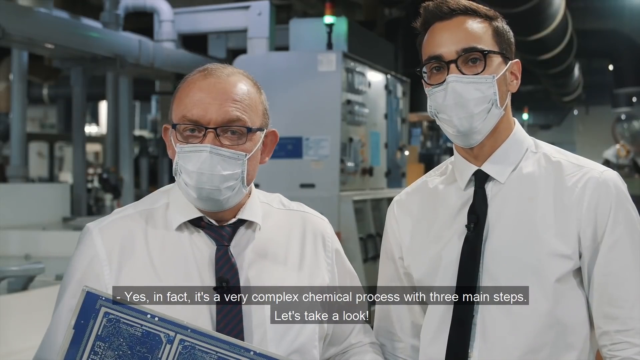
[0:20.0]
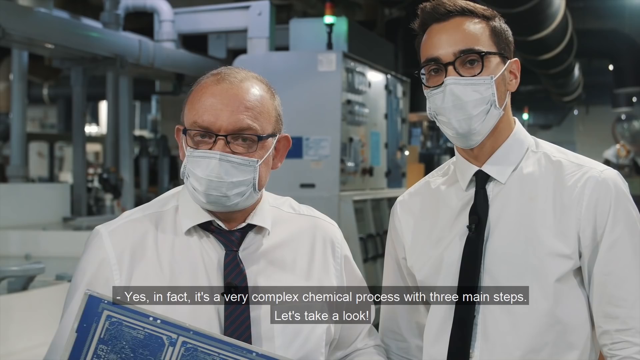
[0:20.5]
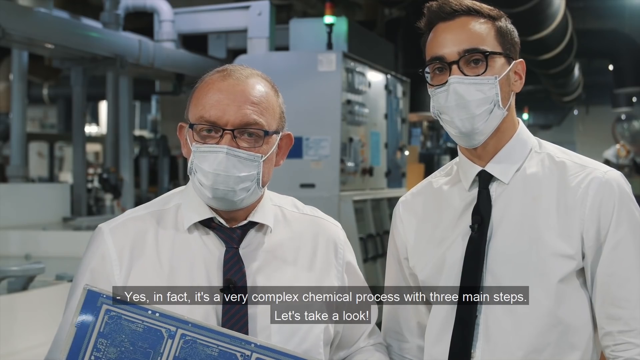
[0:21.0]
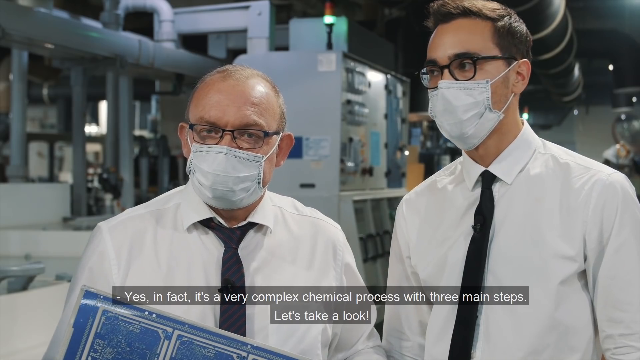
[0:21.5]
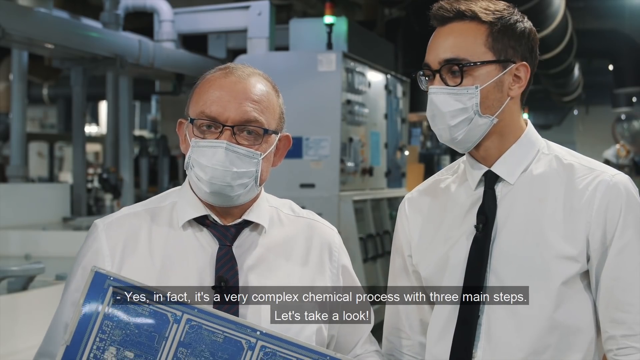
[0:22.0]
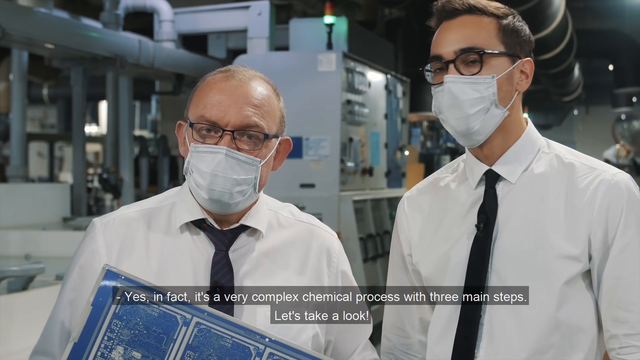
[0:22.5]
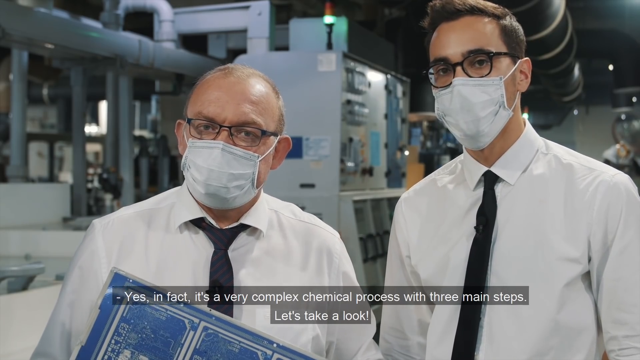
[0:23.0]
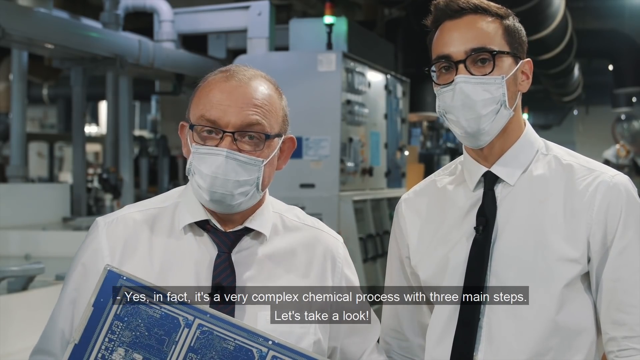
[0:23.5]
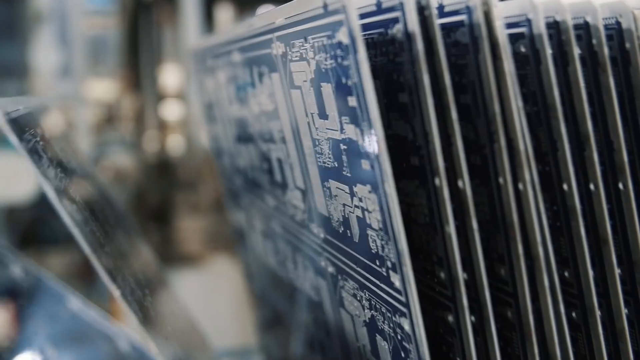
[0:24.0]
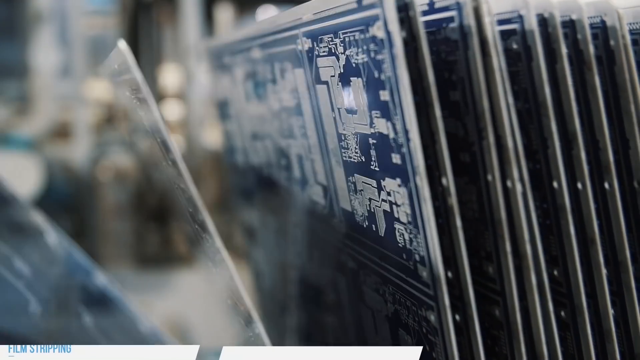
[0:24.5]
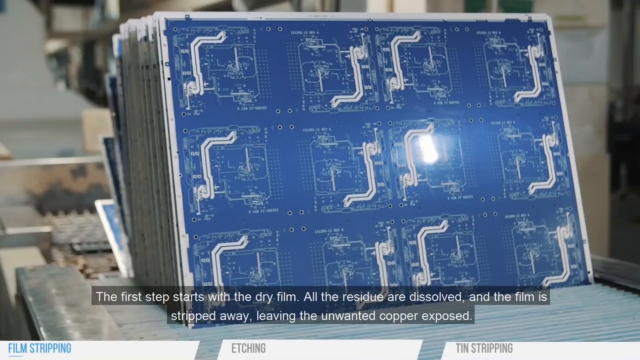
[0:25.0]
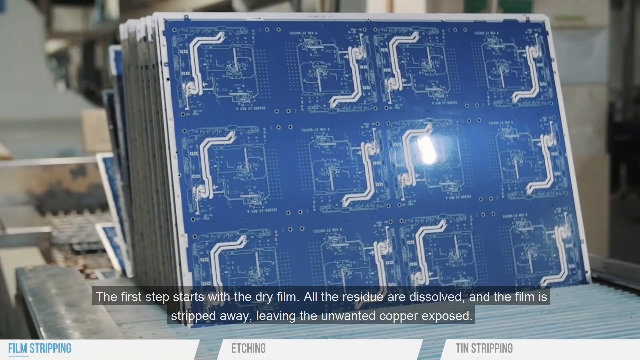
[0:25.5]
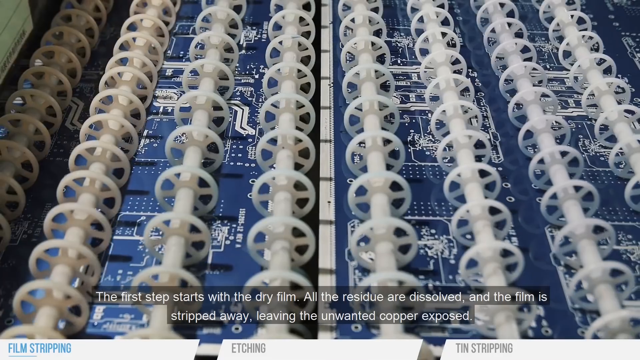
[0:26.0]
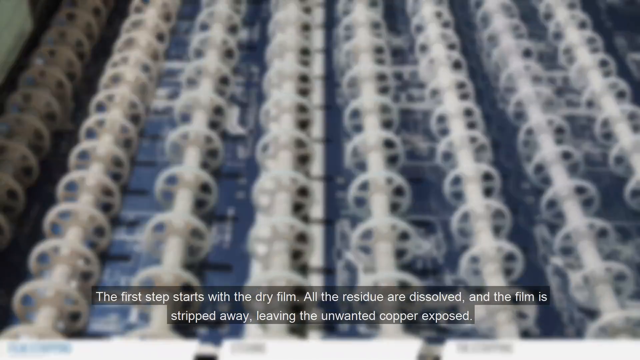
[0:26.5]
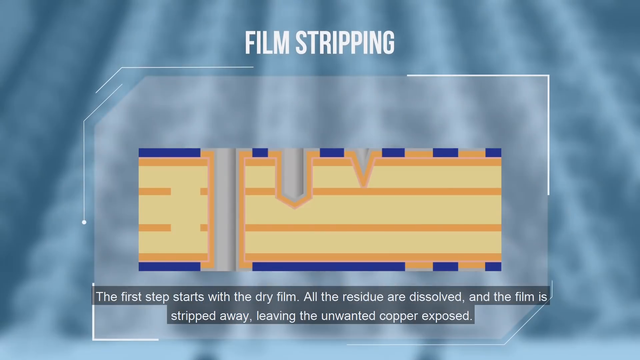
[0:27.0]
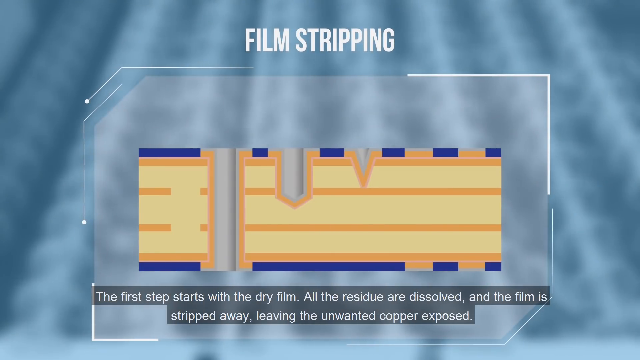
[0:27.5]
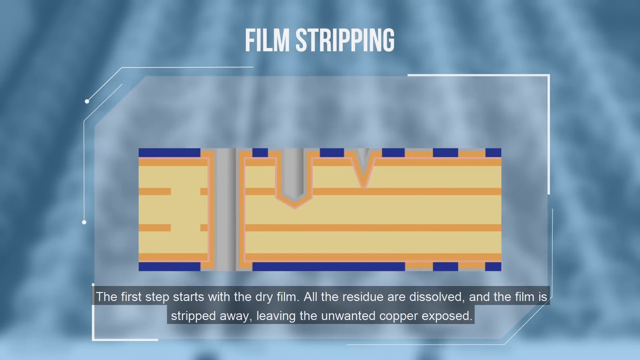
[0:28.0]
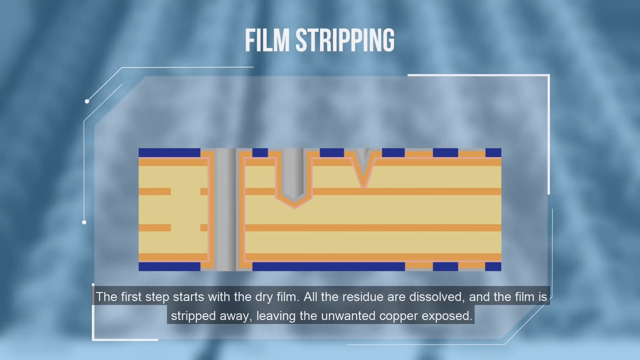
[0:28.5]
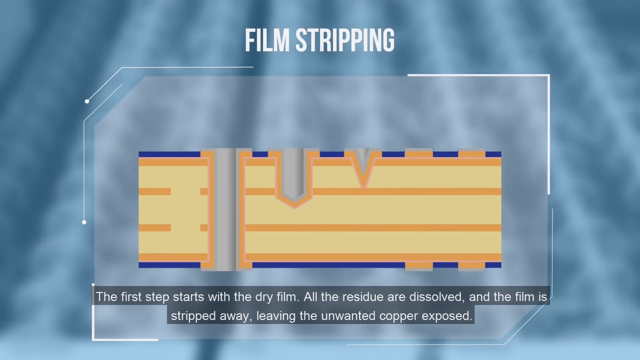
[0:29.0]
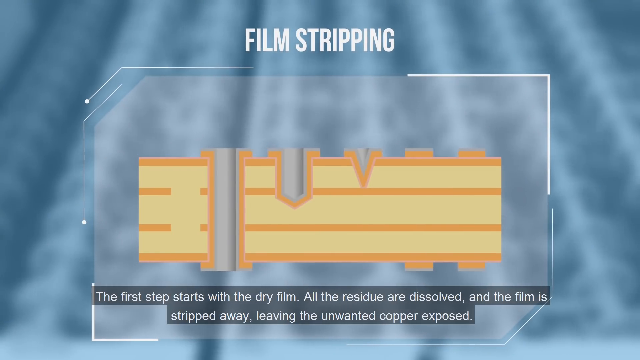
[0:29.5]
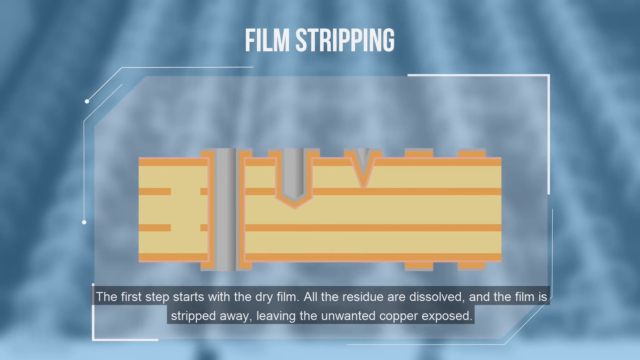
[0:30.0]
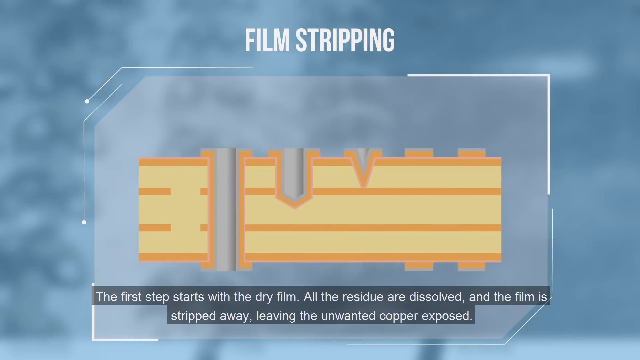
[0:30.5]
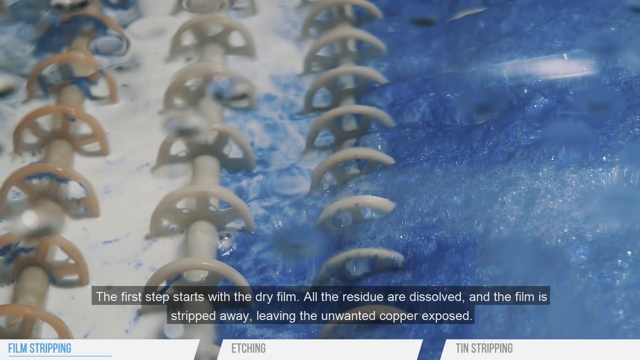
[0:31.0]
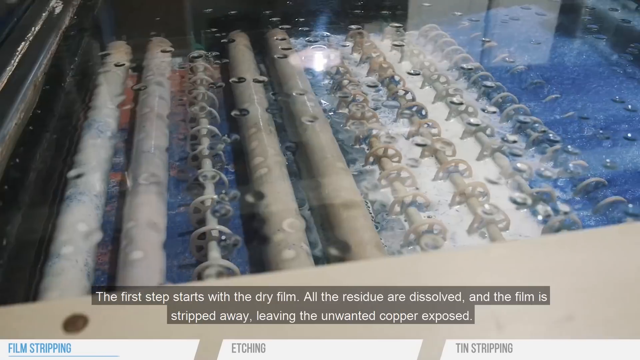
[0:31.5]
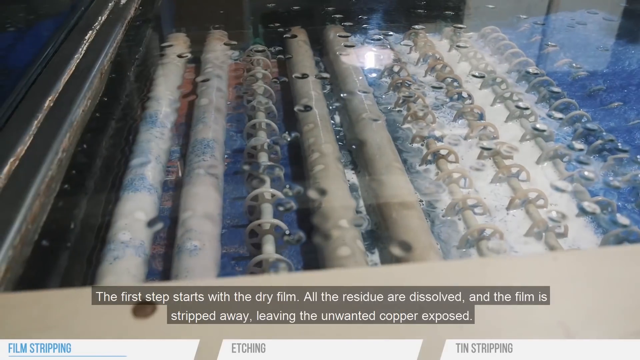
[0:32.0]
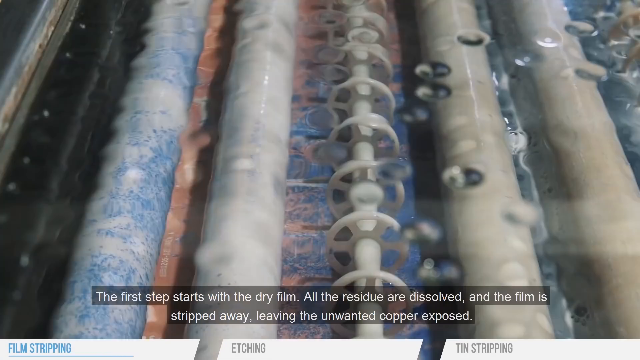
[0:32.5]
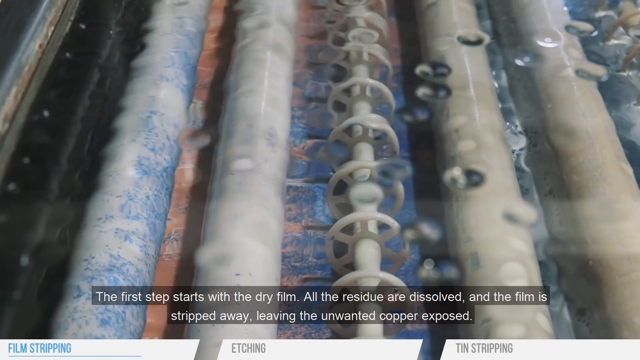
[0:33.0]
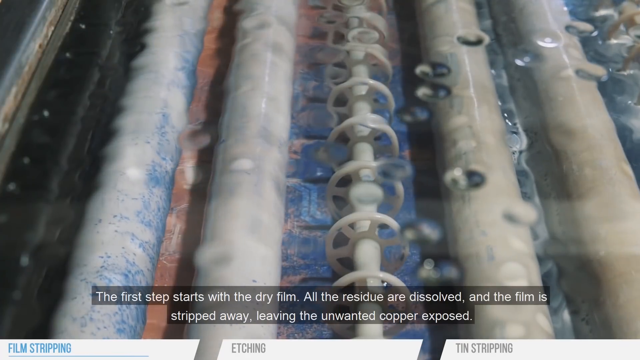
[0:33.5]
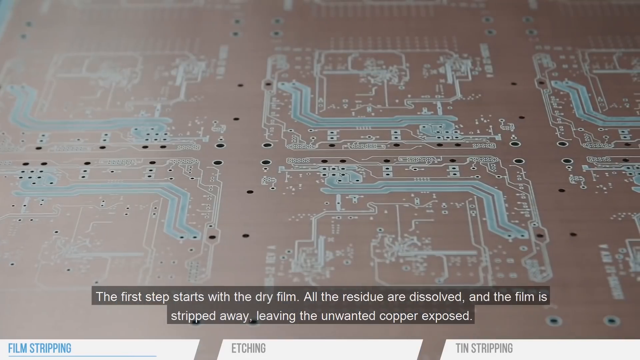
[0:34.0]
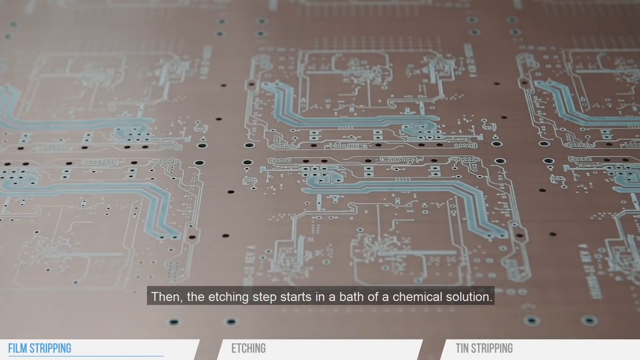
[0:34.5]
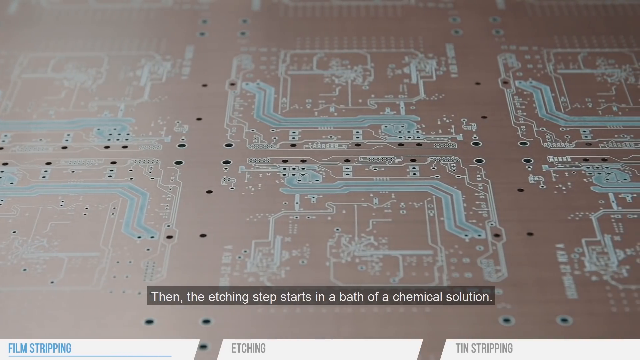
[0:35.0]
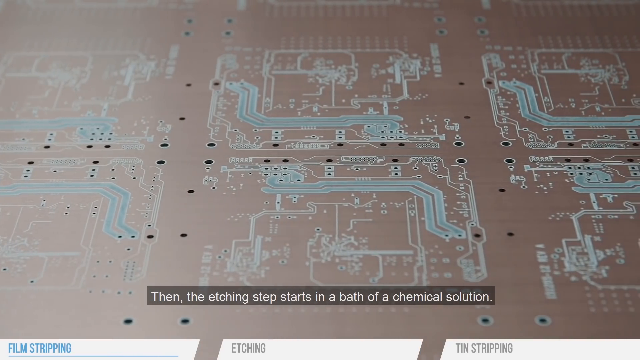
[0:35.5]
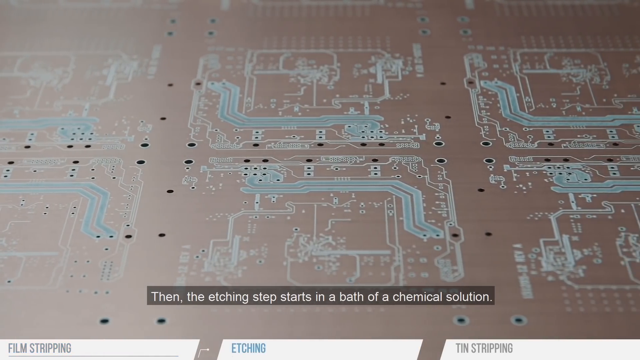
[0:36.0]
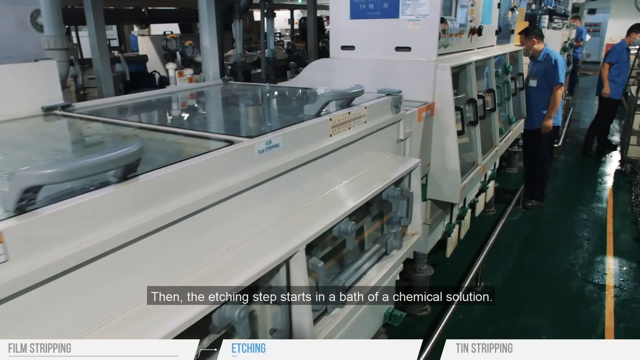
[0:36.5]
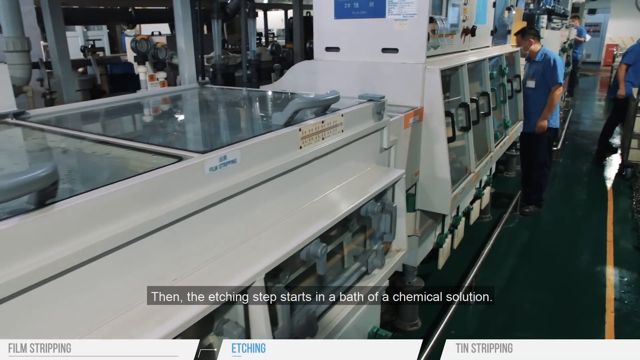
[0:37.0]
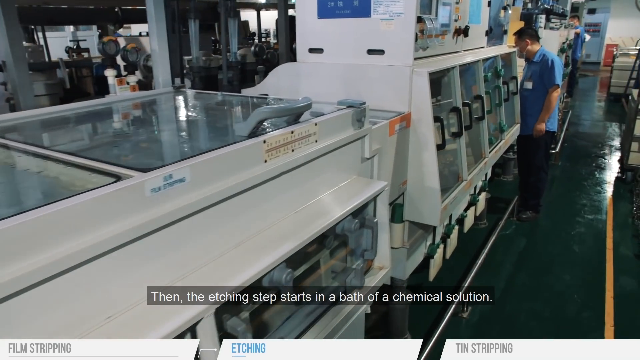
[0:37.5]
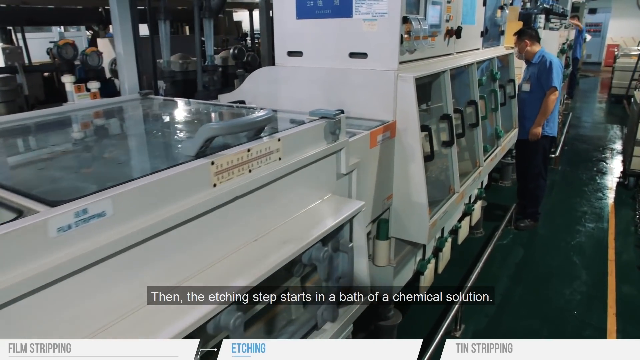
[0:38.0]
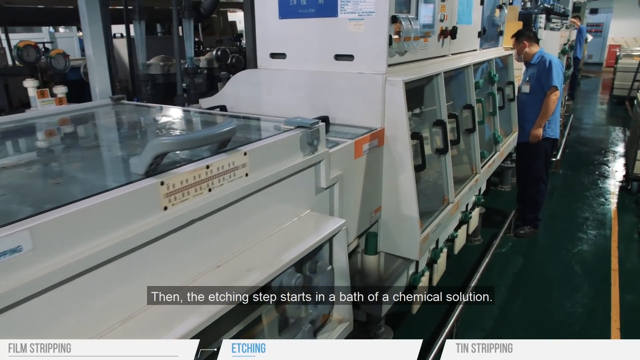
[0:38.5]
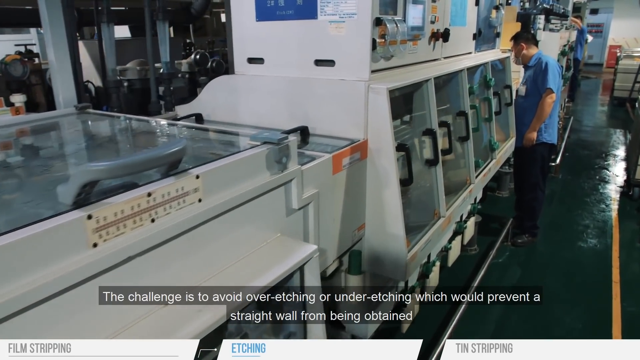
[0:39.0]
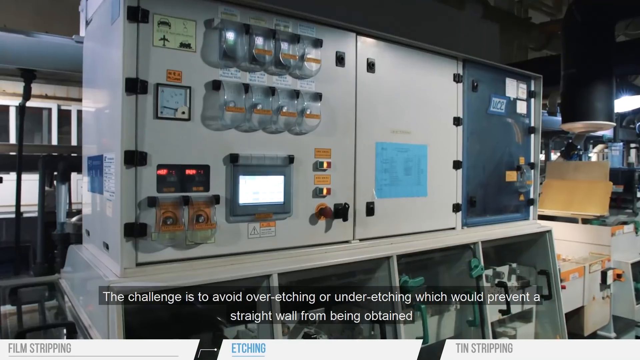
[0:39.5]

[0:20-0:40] The two men stand side by side wearing face masks with glasses, black ties and white shirts; one of them, the man who said it is a very complex chemical process, holds a printed circuit board. Row upon row of etched printed circuit boards make their way into a machine with little guide wheels that slowly move the boards through the chemical process. Text beneath mentions "film stripping" and that the first step starts with the dry film, all the residue is dissolved and the film is stripped away, leaving the unwanted copper exposed, while a graphical sketch of this process is shown on screen. The real process is then shown with the little cog wheels and the chemical stripping the film away; the blue boards that went in now show exposed copper. Next, the etching step starts in a bath of a chemical solution: a row of equipment with all kinds of doors and levers appears, with people in face masks, and the commentary mentions that the challenge is to avoid over-etching or under-etching, which would prevent a straight wall from being obtained.